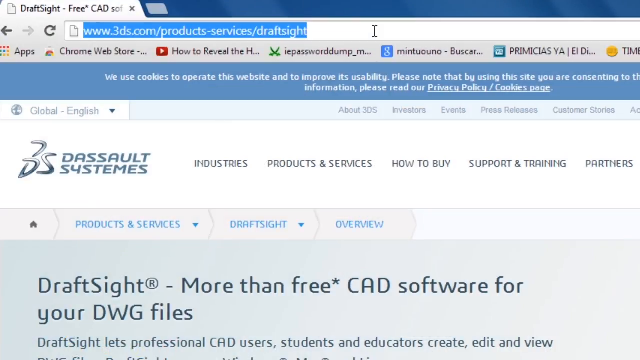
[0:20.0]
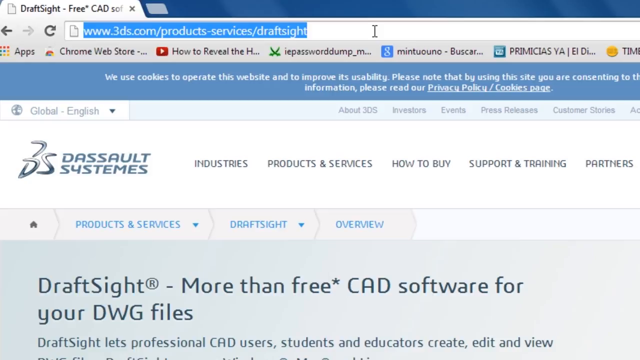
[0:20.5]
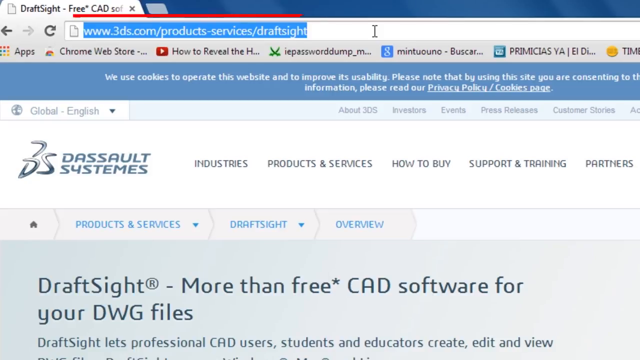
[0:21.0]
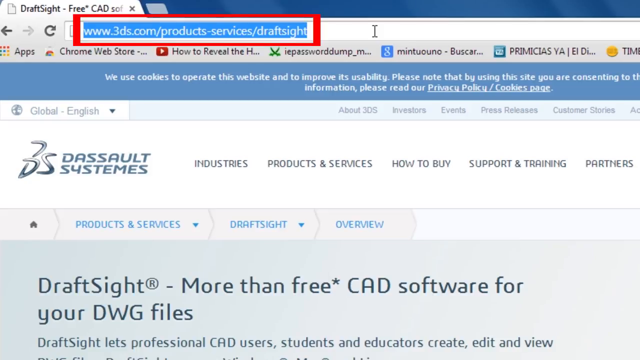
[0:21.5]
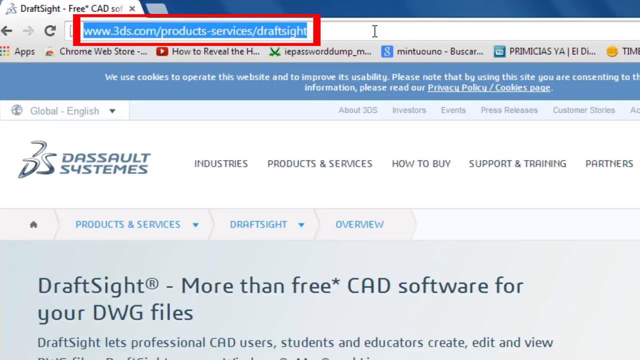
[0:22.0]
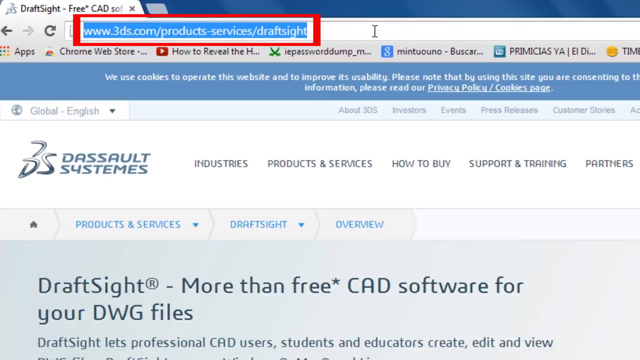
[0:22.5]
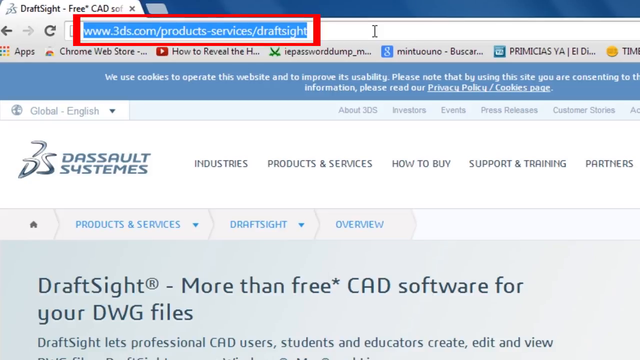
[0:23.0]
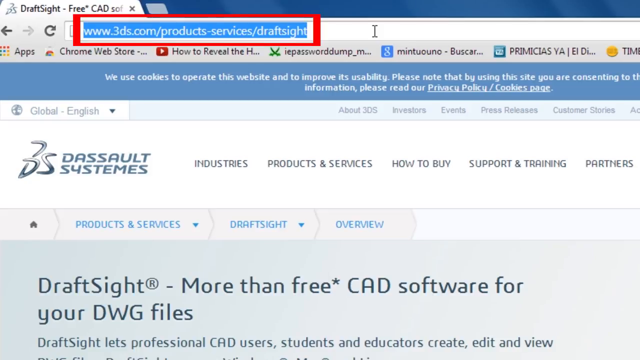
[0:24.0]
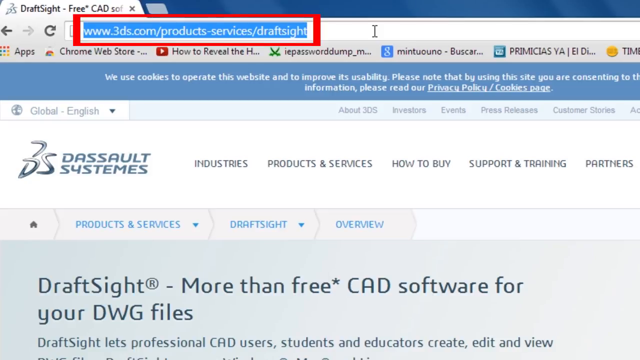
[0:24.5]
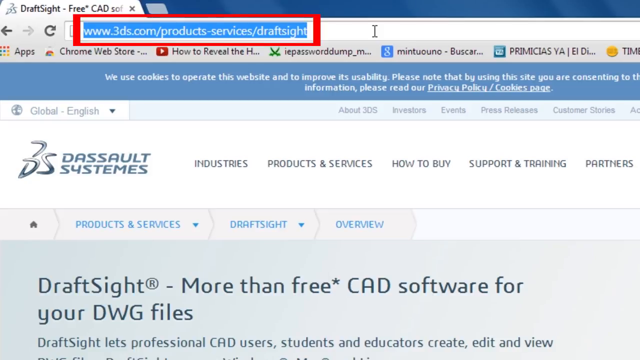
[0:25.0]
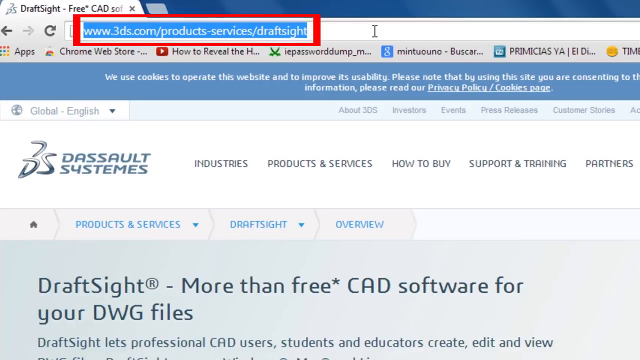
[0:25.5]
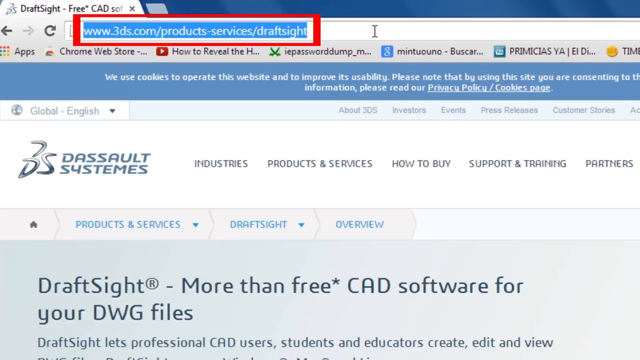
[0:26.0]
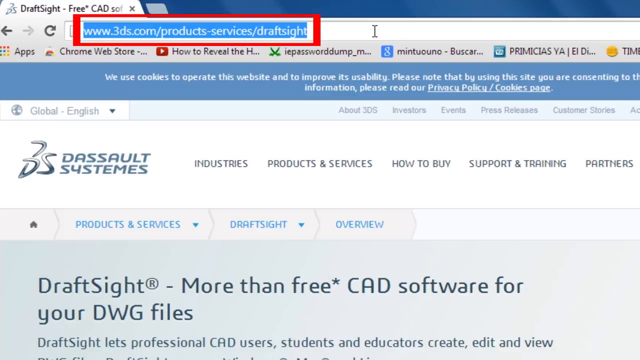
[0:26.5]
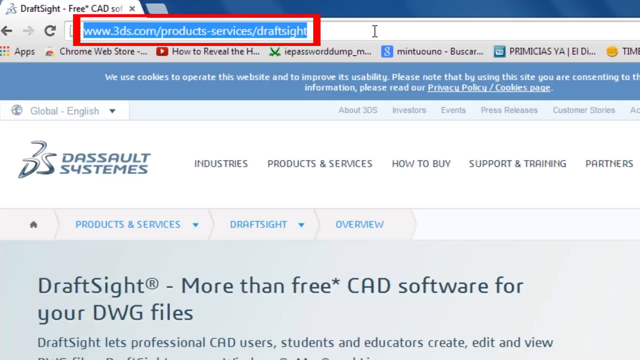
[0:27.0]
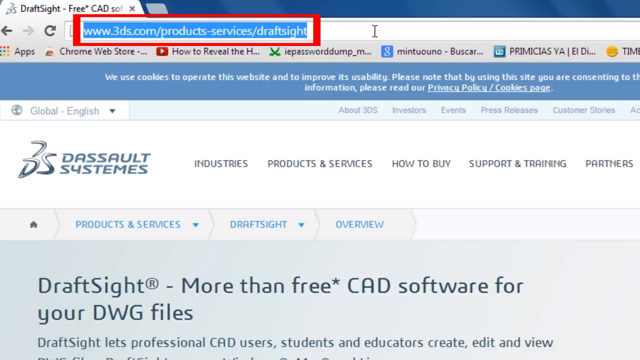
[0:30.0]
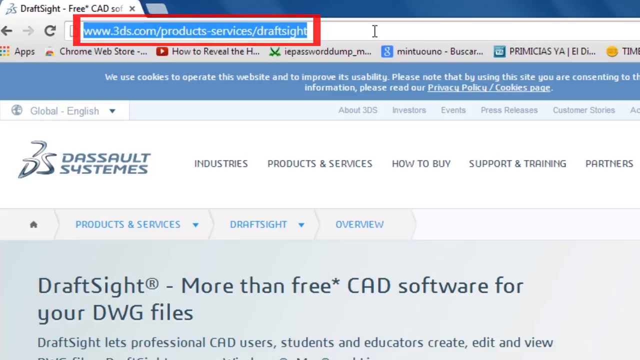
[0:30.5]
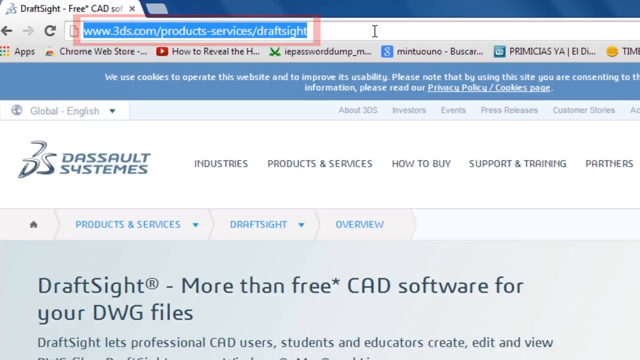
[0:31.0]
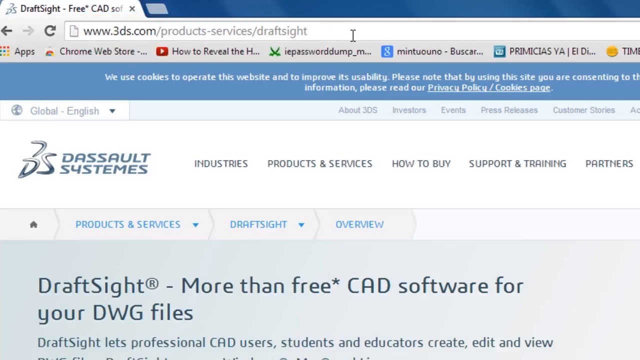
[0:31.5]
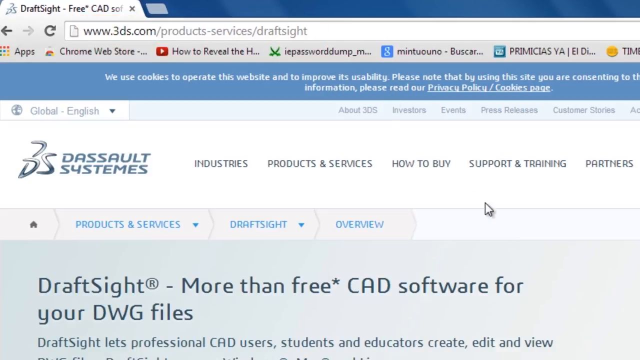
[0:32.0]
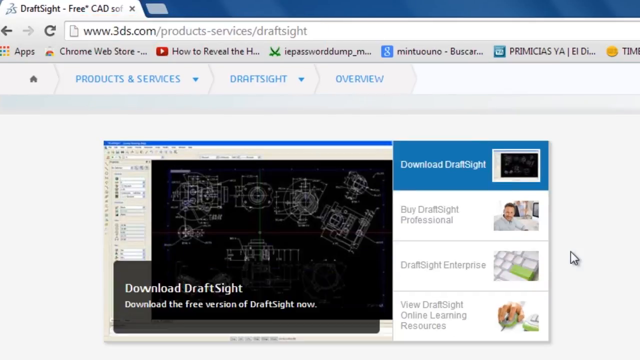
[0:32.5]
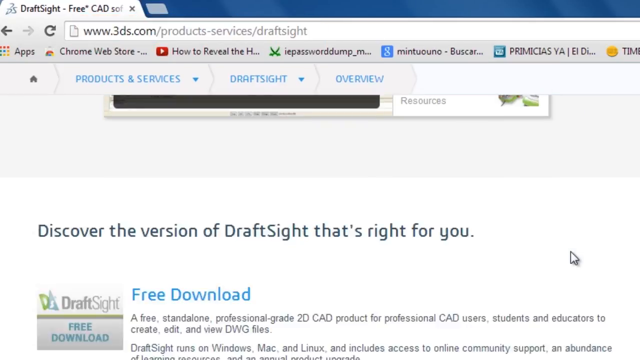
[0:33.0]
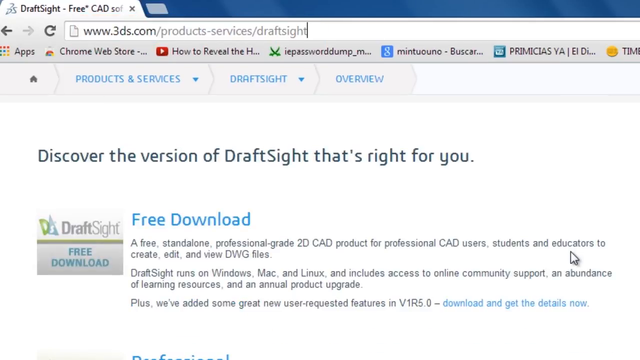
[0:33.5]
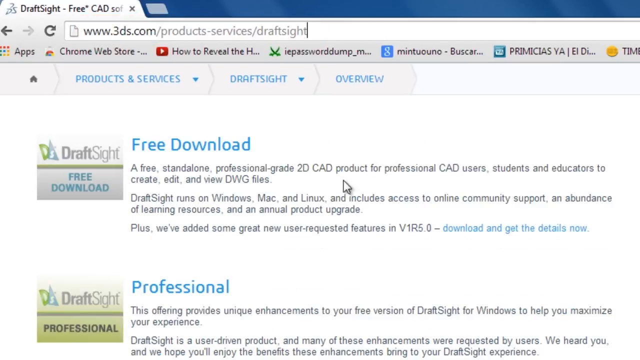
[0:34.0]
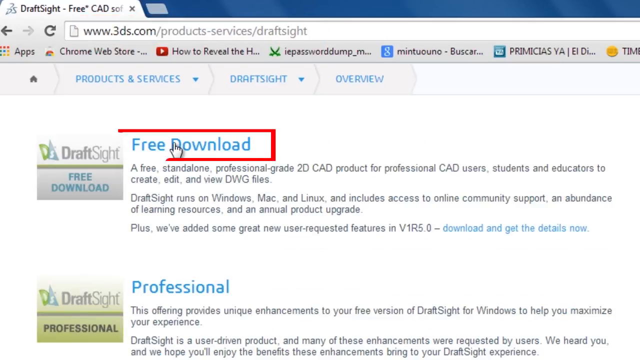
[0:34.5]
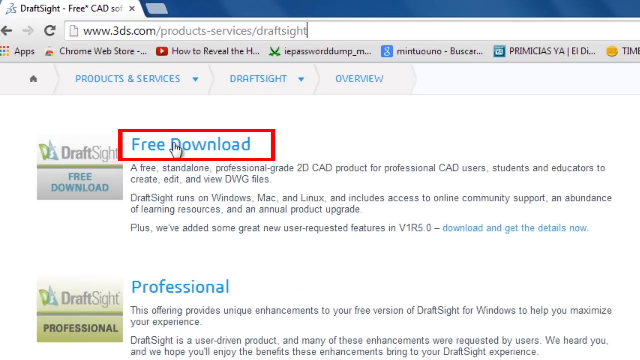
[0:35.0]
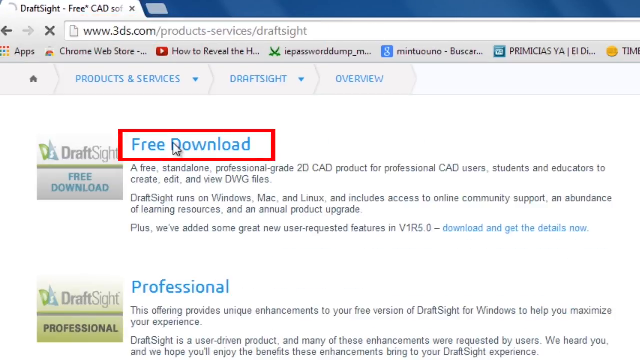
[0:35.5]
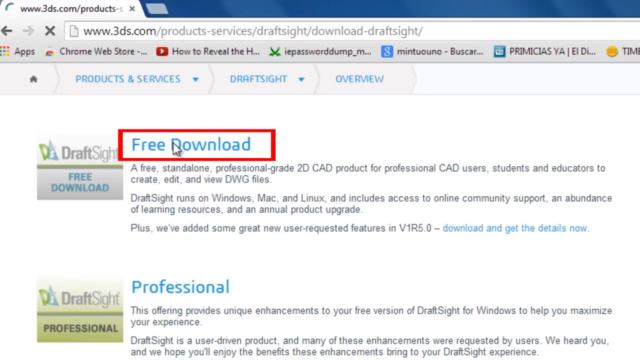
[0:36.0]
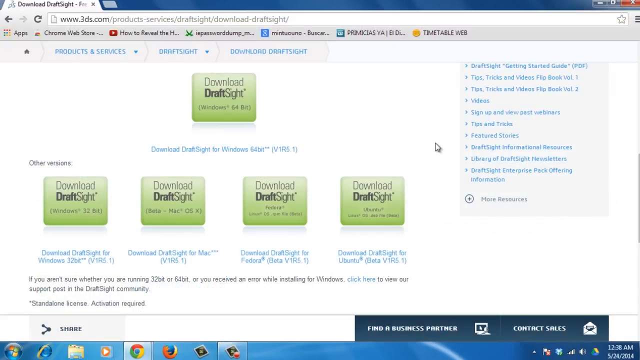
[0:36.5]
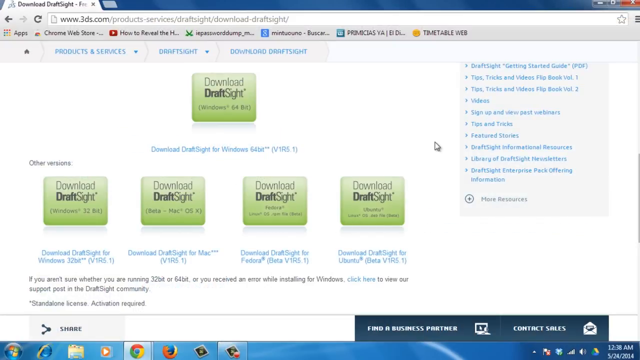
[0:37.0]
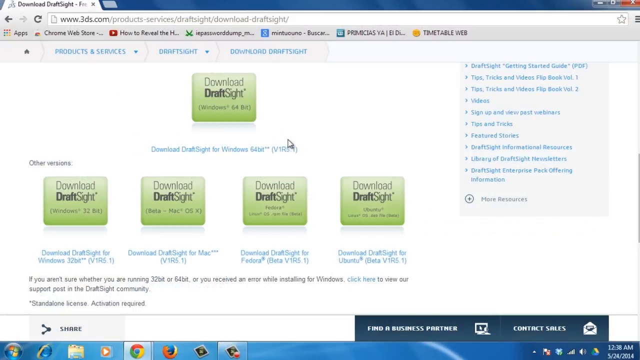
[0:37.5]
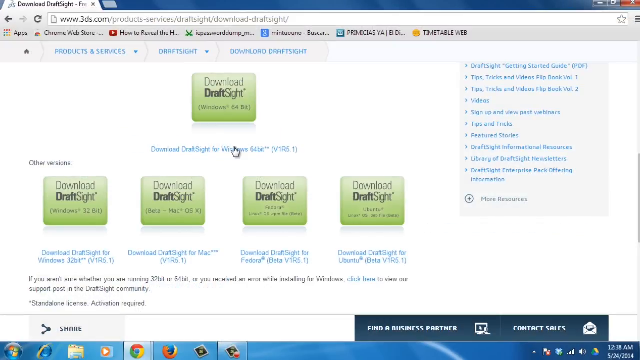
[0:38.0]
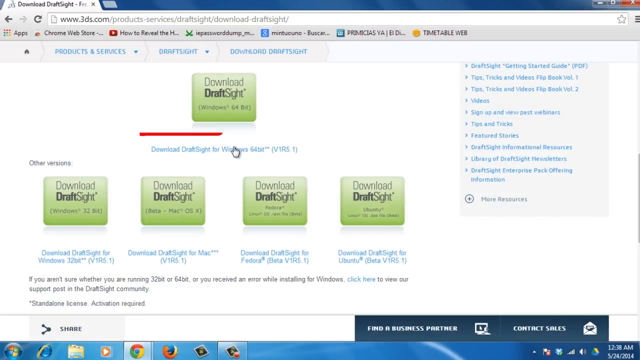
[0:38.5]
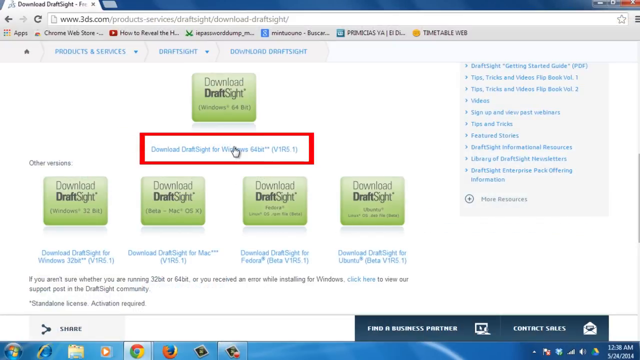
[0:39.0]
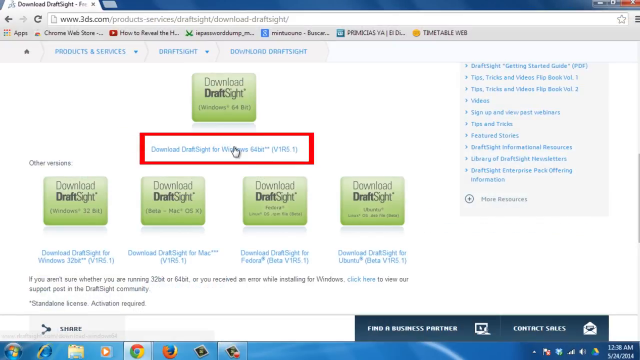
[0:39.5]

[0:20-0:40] In Google Chrome, the user is on the Dassault Systèmes website, where the text reads "DraftSight, more than free CAD software for your DWG files." The user draws a red box in the address bar to highlight the site's address. The user then scrolls down, revealing different software available for download on the site, draws the same red highlight box on the free download option, and clicks it. This leads to the options for downloading the program DraftSight for free, with five versions available. The user highlights another part of the page with a red box, reading "Download DraftSight for Windows 64-bit," and clicks on it.